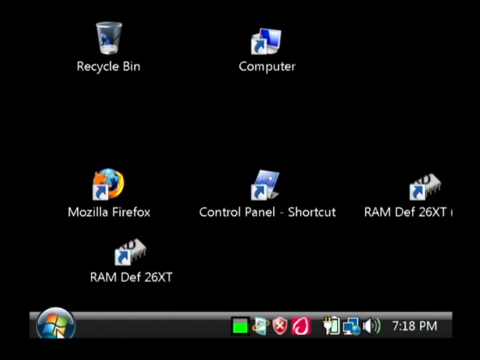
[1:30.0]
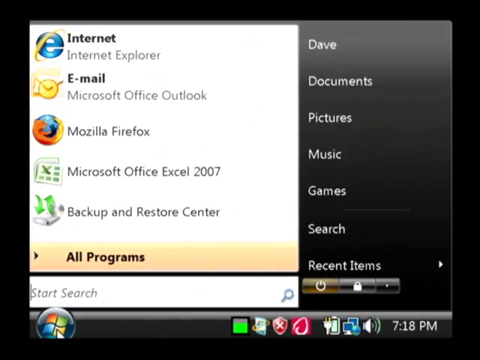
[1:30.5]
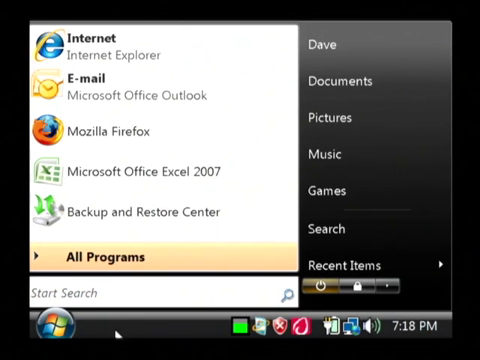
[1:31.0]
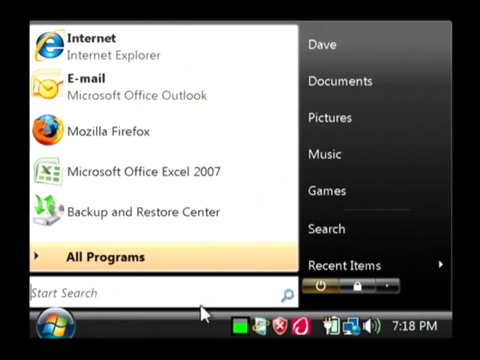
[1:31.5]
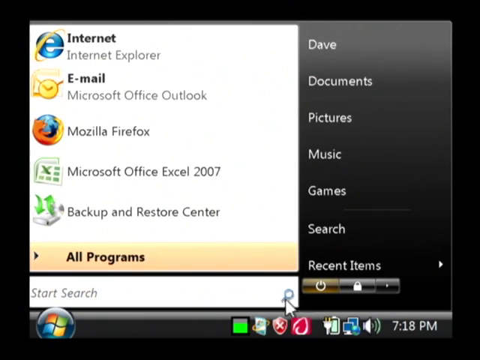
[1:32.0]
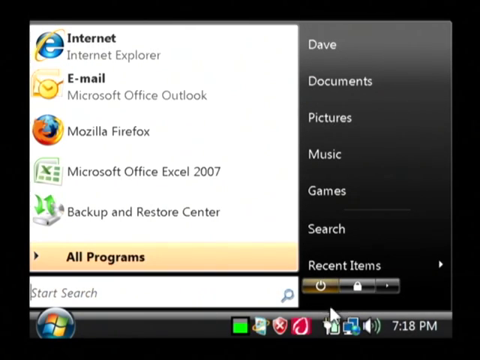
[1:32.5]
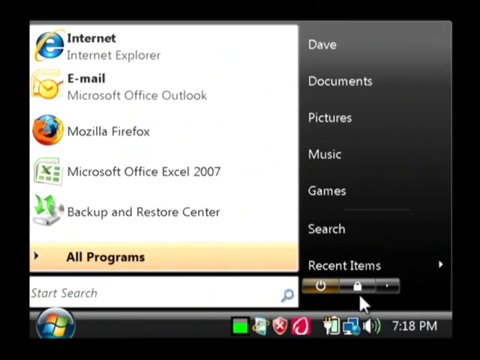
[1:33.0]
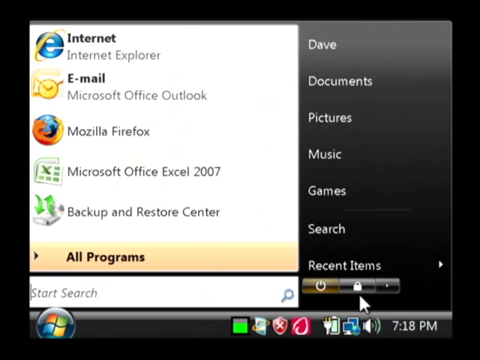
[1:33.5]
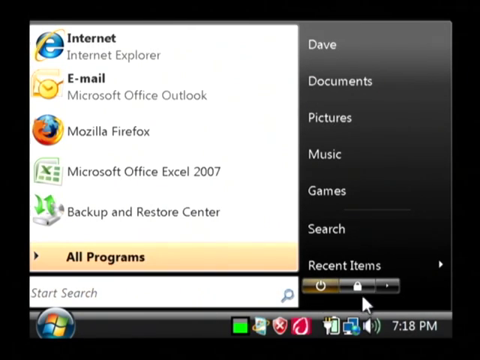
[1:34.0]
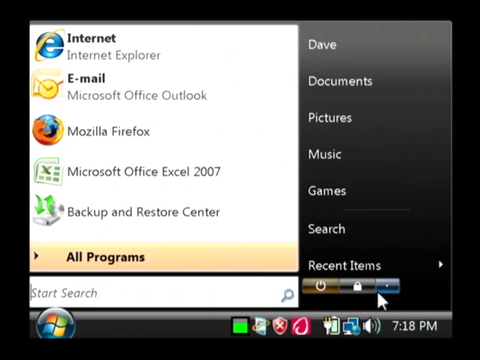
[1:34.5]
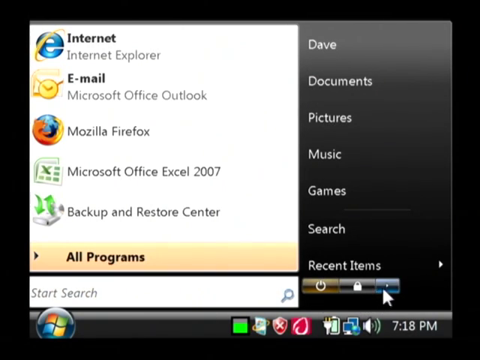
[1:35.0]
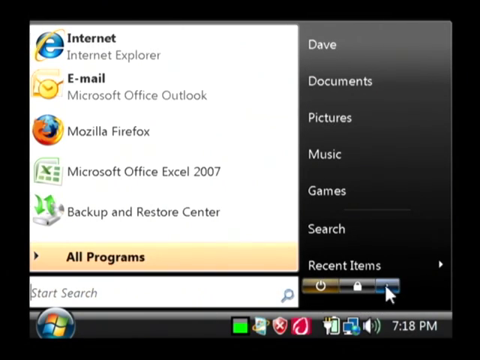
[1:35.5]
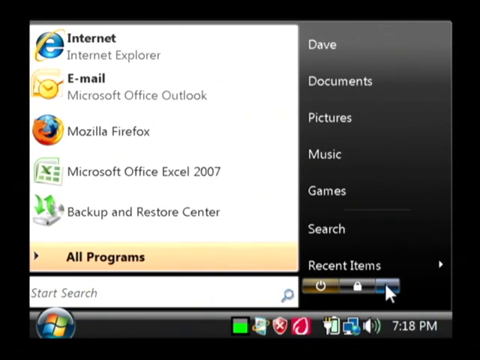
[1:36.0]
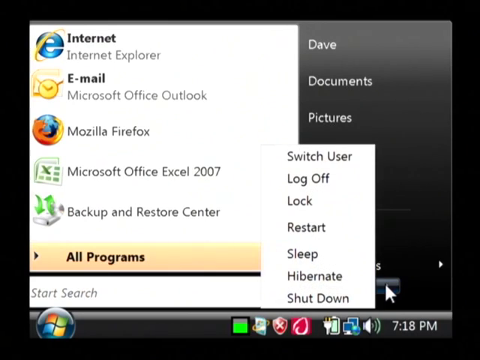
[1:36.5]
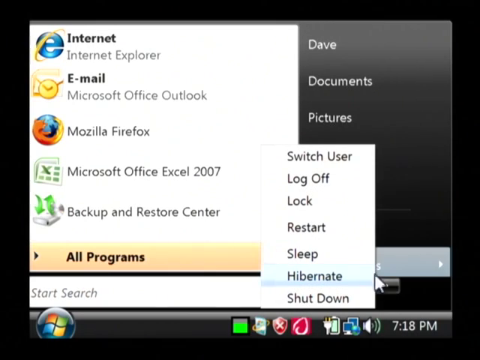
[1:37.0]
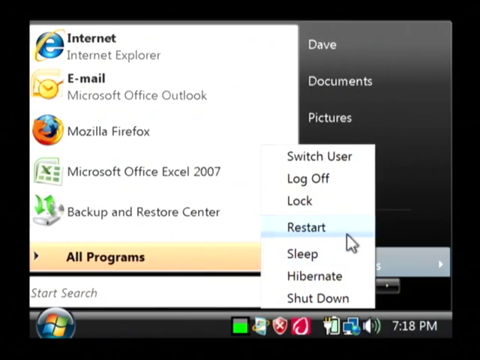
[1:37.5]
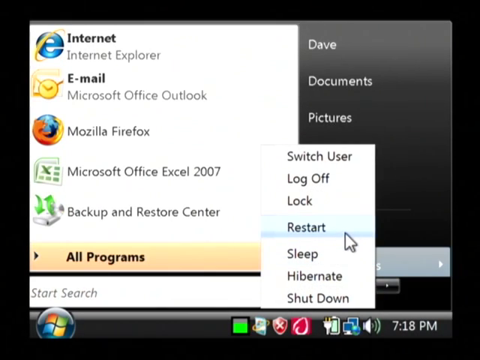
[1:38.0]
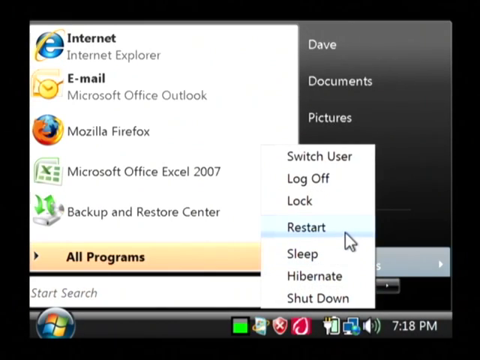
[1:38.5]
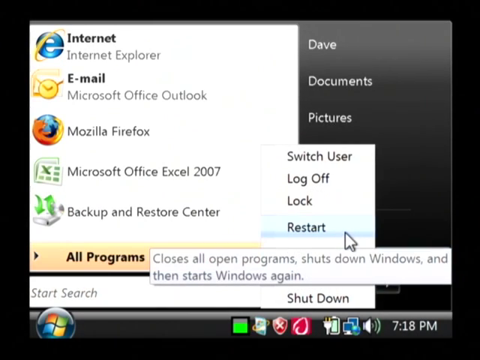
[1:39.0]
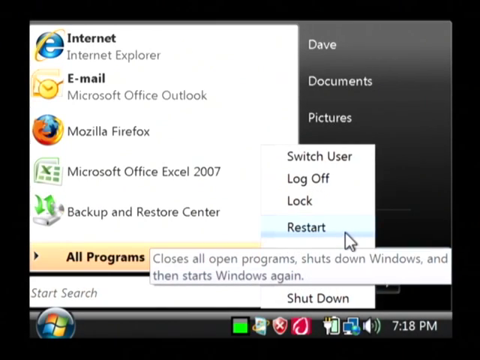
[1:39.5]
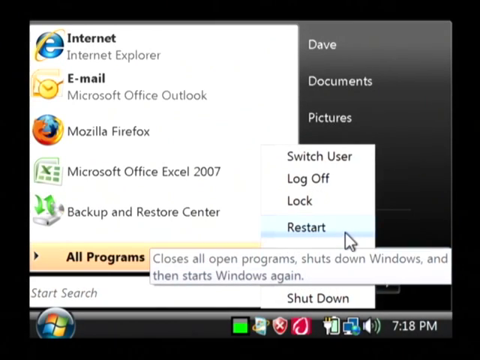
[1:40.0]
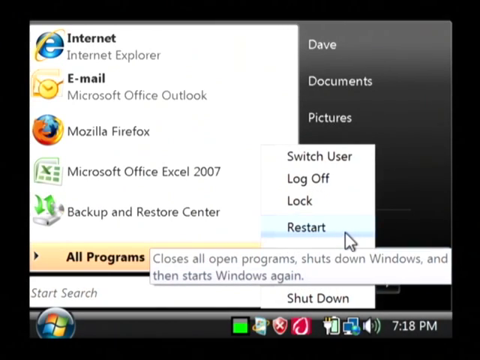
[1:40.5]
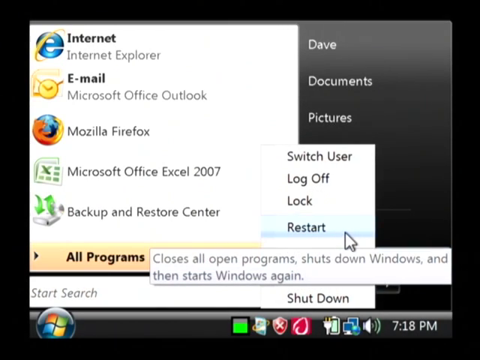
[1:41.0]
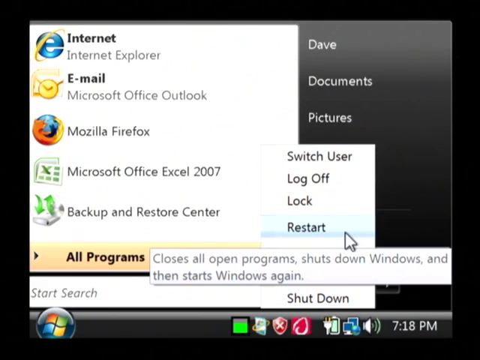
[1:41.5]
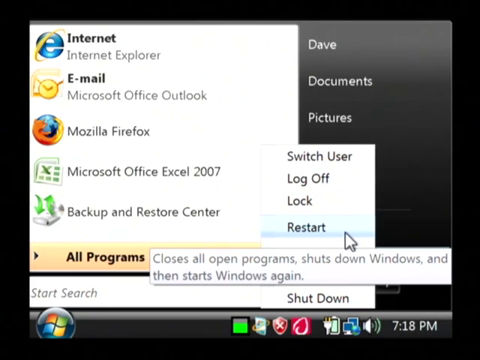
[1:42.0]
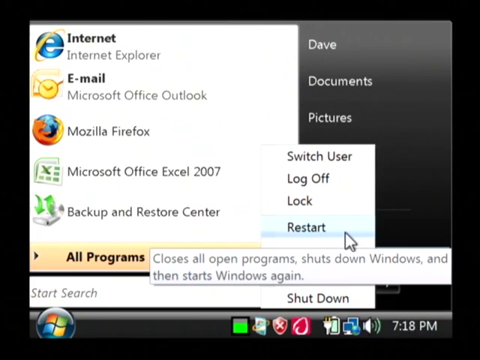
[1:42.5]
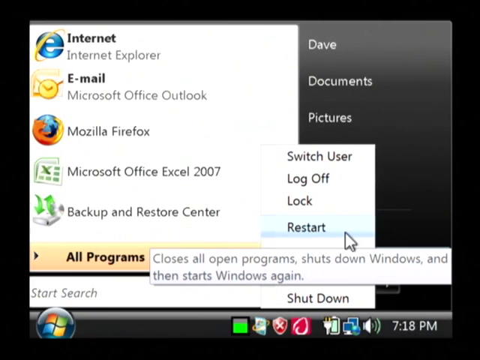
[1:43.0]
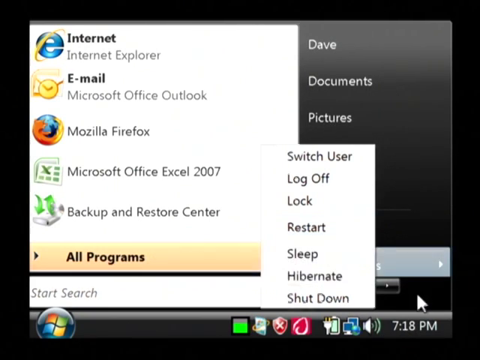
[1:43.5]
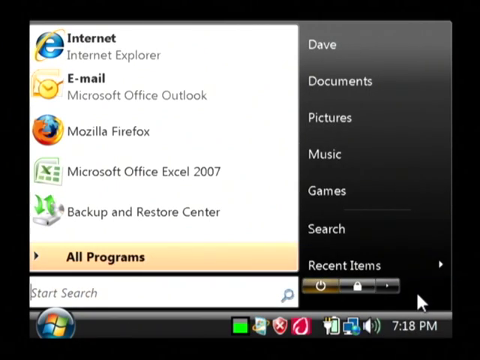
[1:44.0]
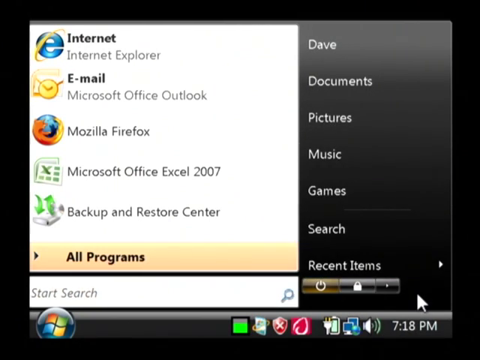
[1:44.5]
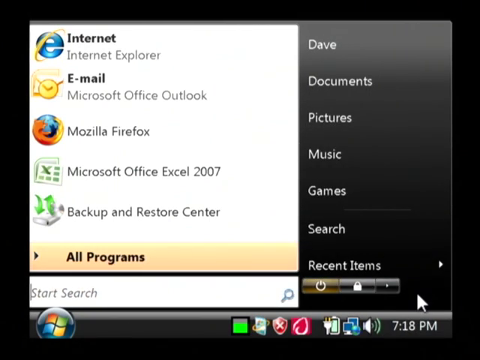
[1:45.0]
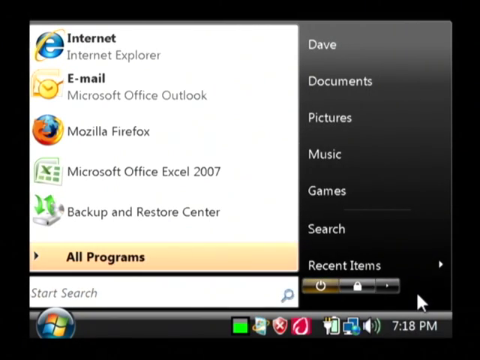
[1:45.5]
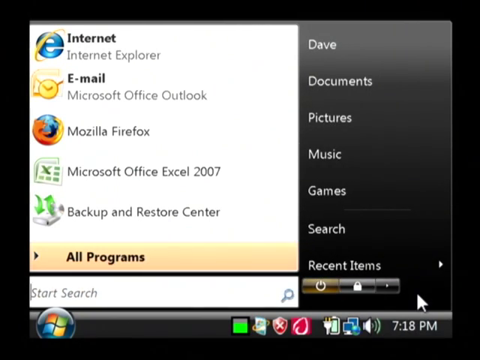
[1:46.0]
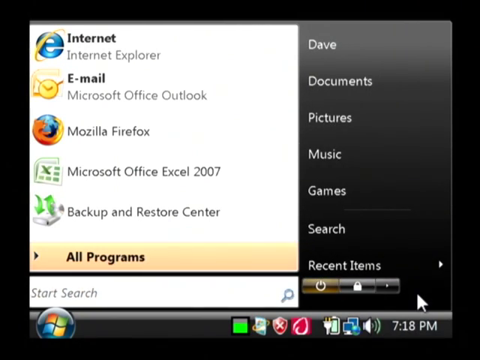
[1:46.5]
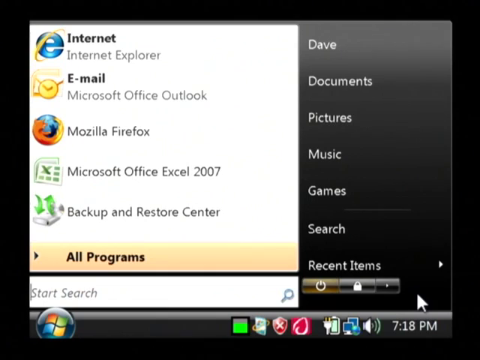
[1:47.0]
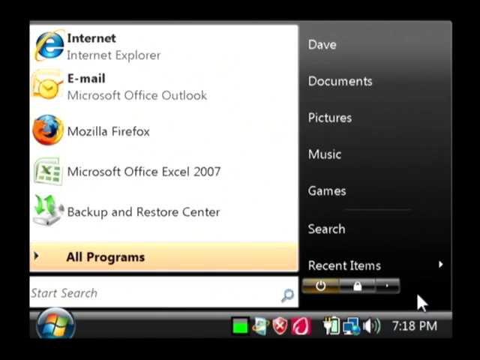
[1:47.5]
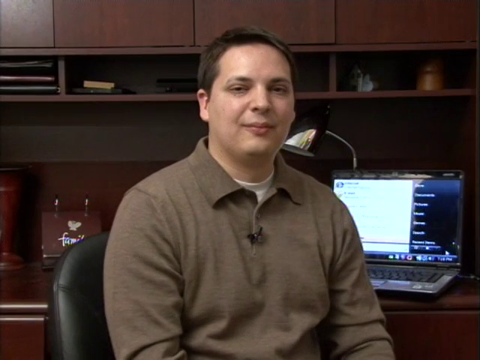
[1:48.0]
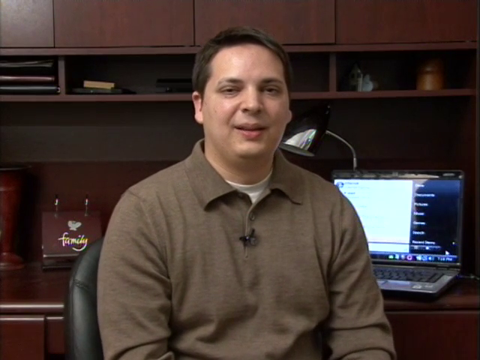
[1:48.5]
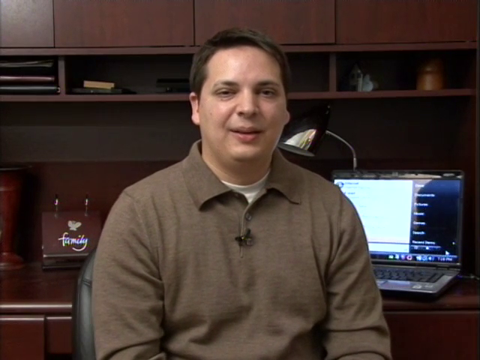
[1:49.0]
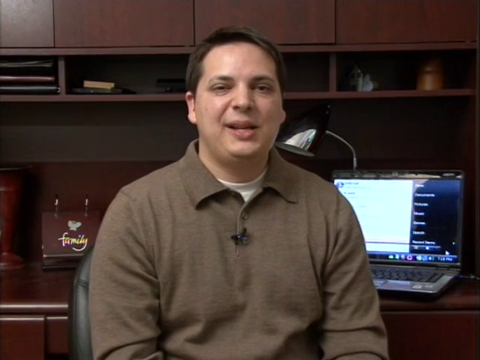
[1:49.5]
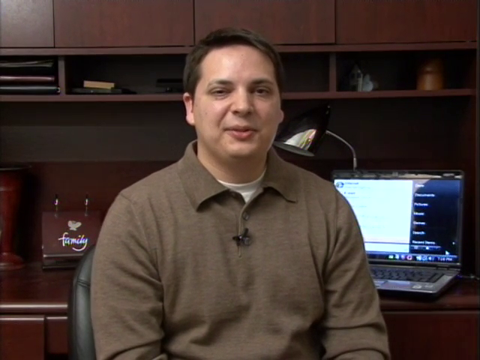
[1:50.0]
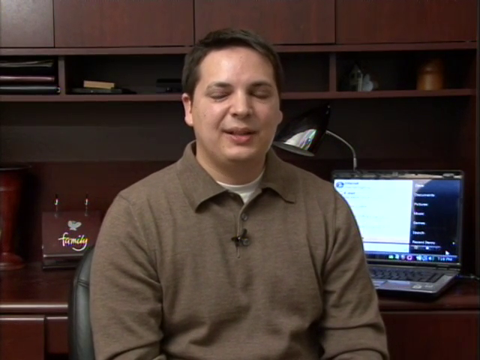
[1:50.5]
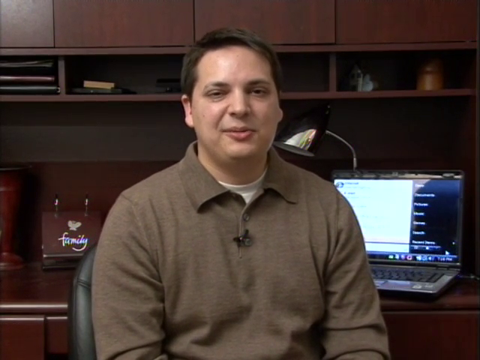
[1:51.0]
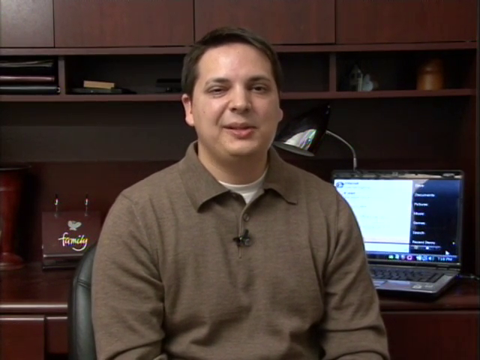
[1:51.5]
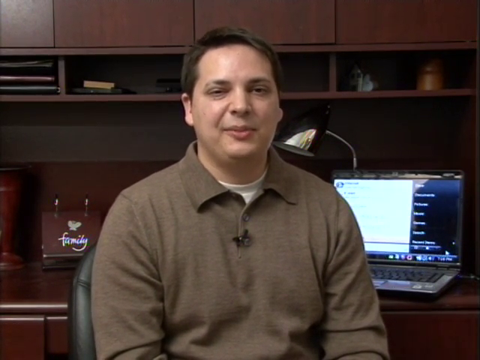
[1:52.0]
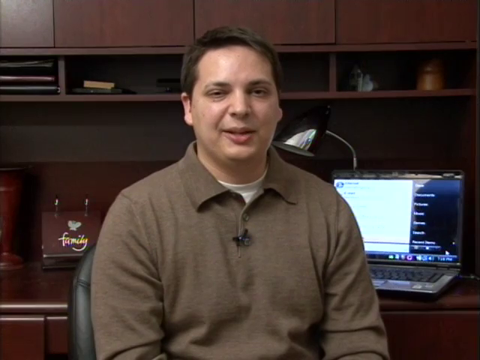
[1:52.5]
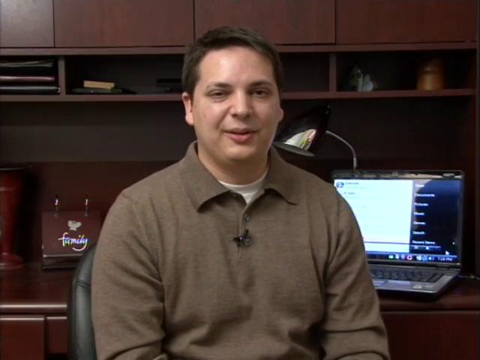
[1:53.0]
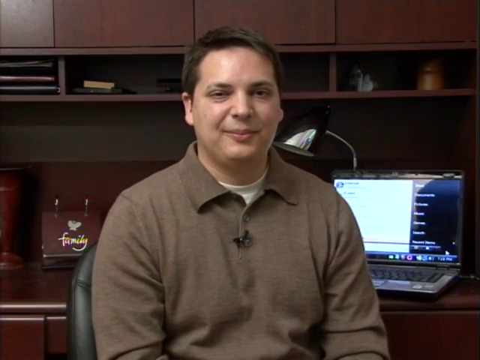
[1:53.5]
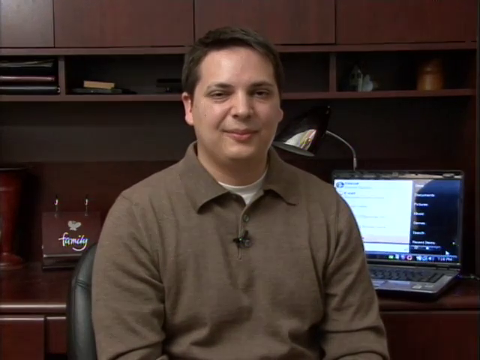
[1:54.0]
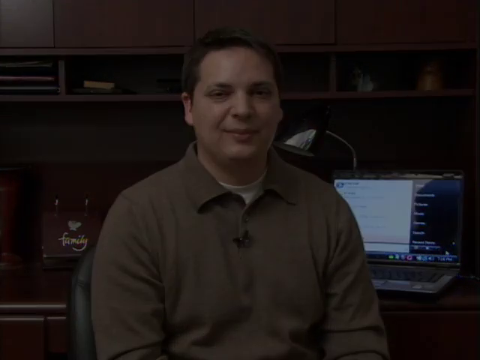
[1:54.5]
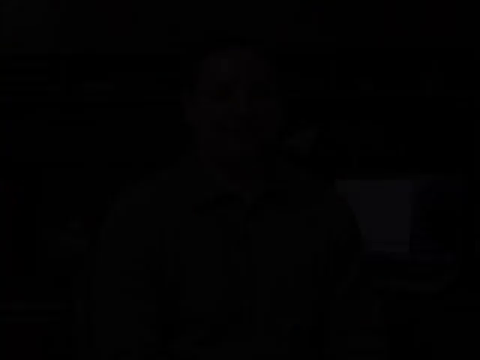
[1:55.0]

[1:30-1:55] A solid black background shows large zoomed-in icons named Recycle Bin, Computer, Mozilla Firefox, Control Panel and RAMDEF. The view quickly changes to the Start menu, with Internet Explorer, Email and Microsoft Office options. The author moves the cursor over to the button next to Restart, which says it closes all open programs, shuts down Windows and then restarts Windows. He then takes the cursor off the Restart button without restarting the computer.